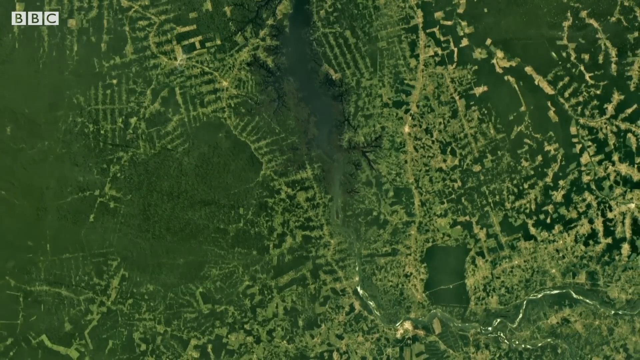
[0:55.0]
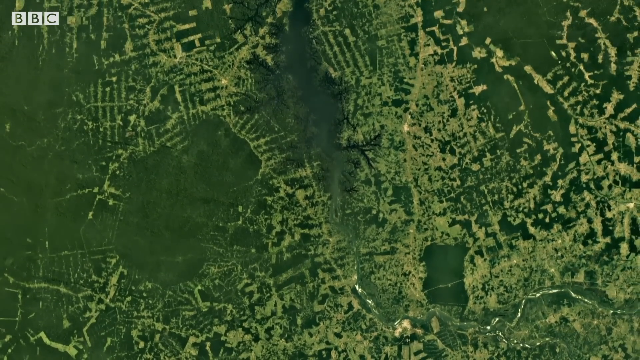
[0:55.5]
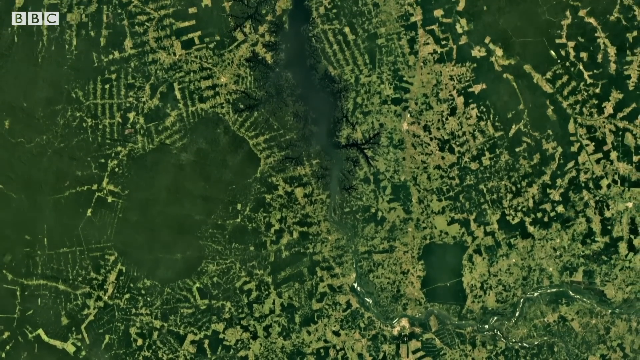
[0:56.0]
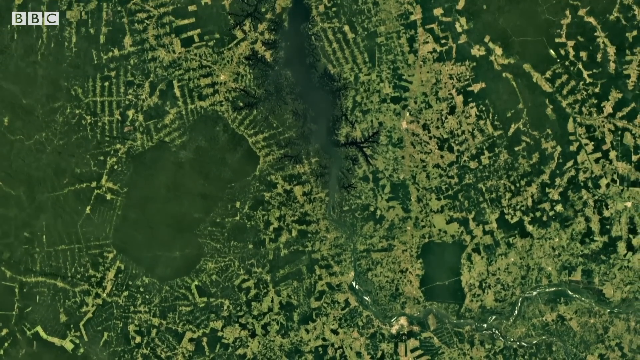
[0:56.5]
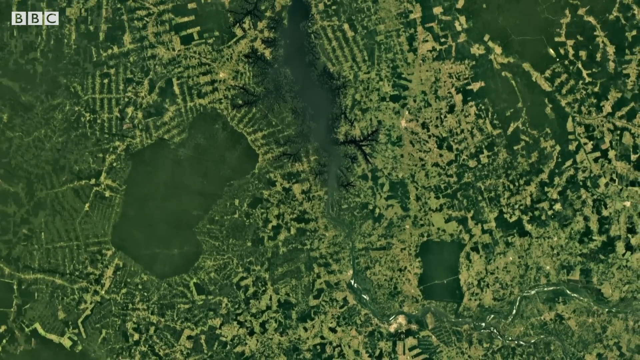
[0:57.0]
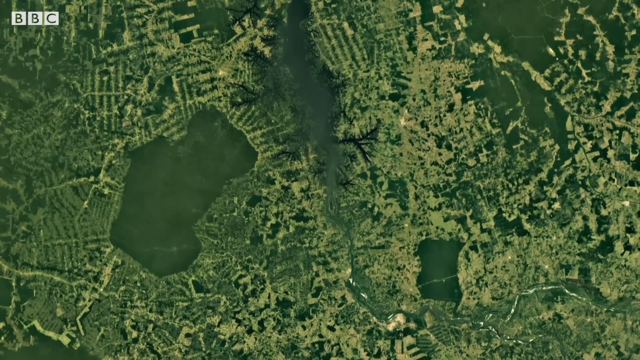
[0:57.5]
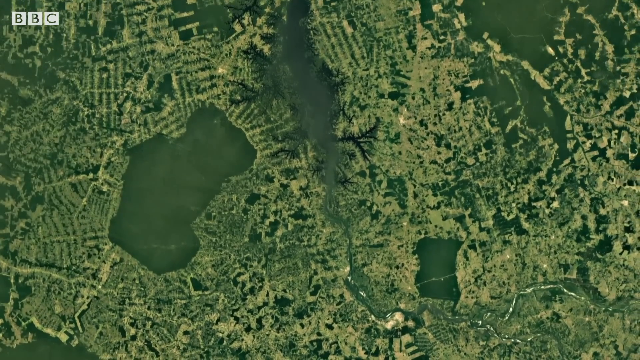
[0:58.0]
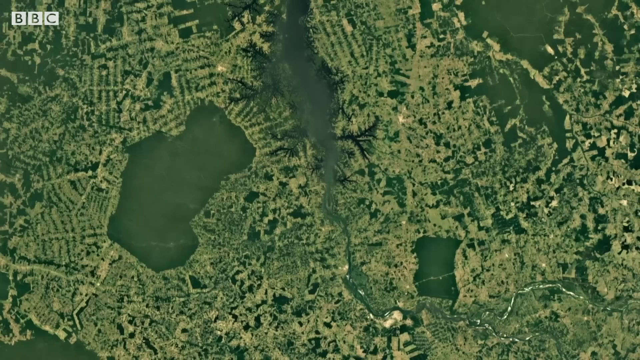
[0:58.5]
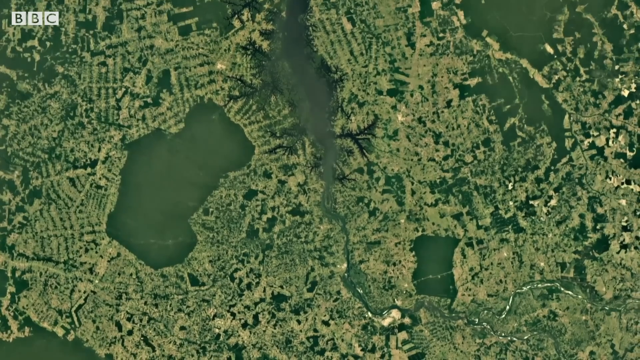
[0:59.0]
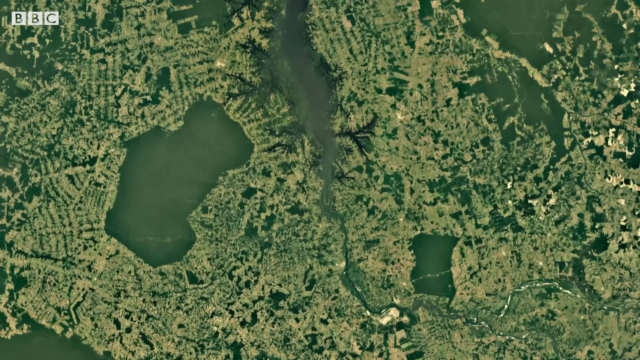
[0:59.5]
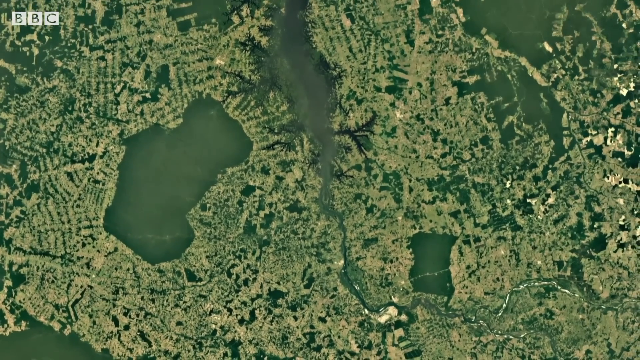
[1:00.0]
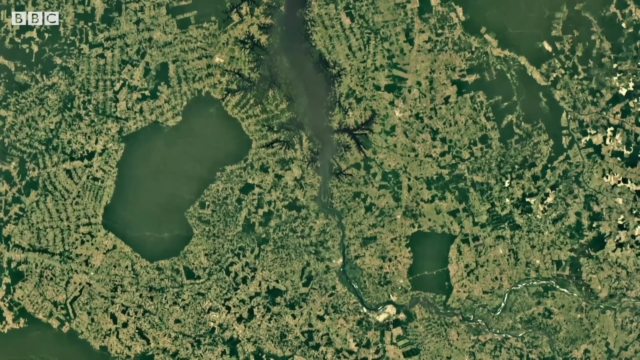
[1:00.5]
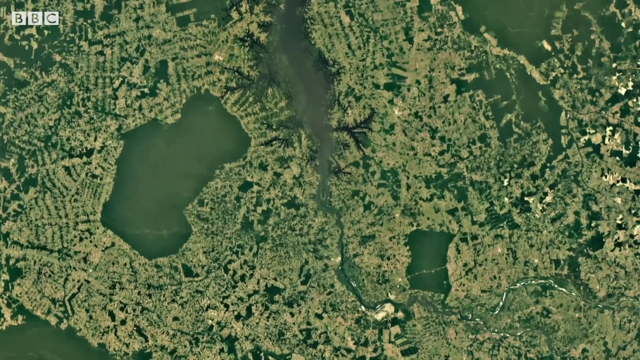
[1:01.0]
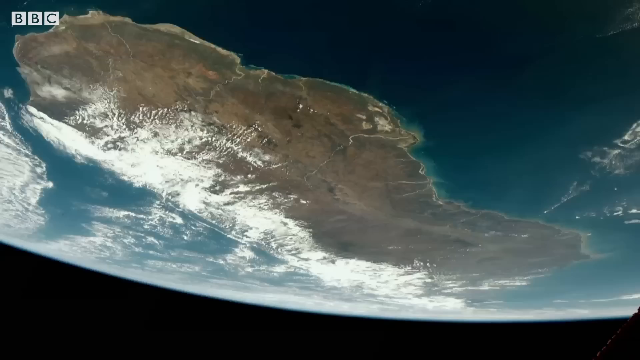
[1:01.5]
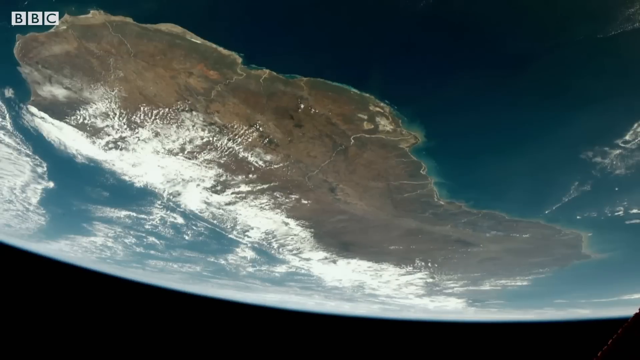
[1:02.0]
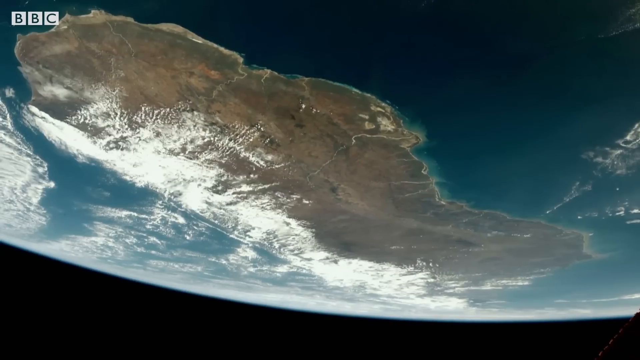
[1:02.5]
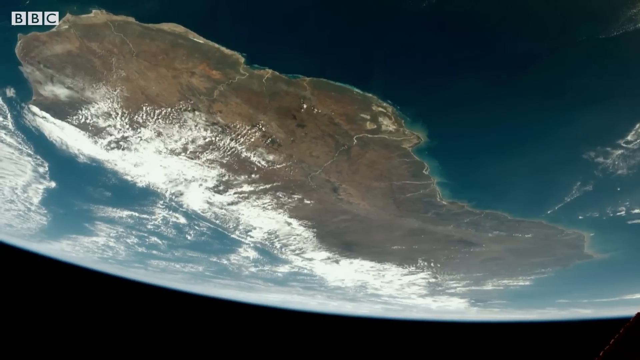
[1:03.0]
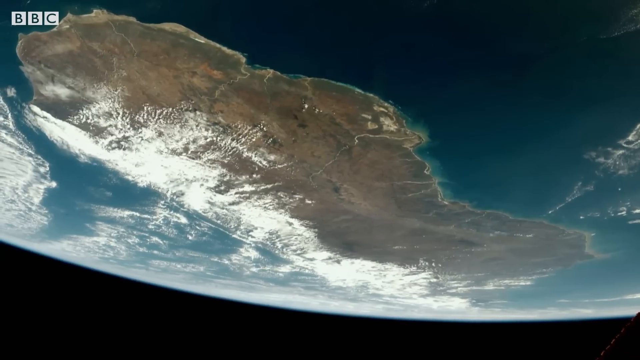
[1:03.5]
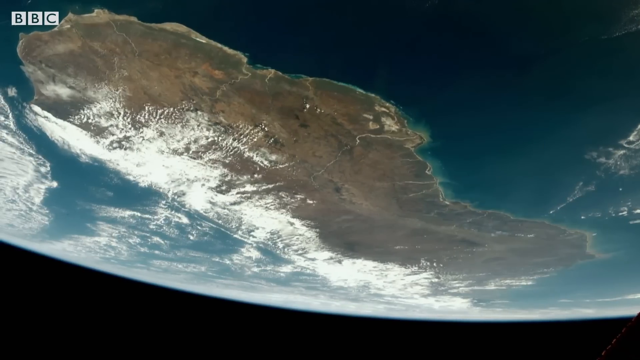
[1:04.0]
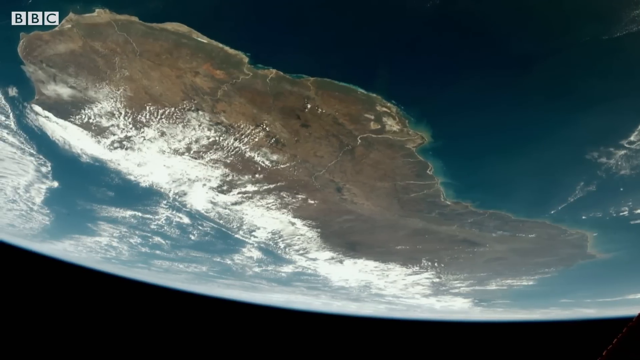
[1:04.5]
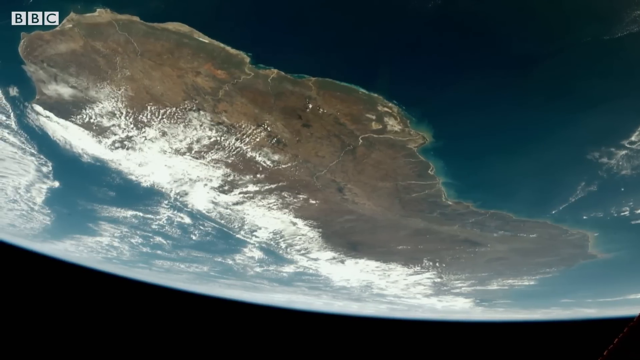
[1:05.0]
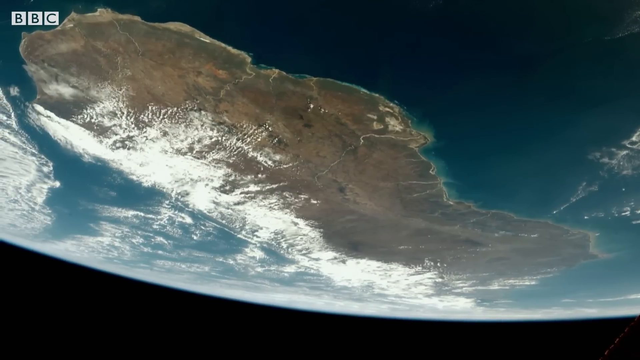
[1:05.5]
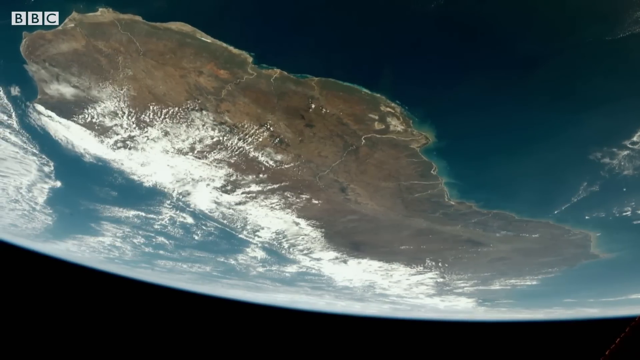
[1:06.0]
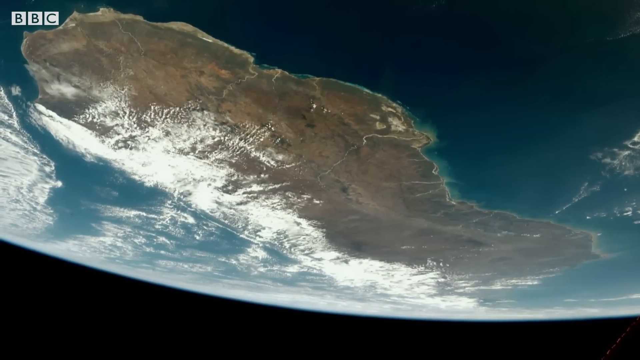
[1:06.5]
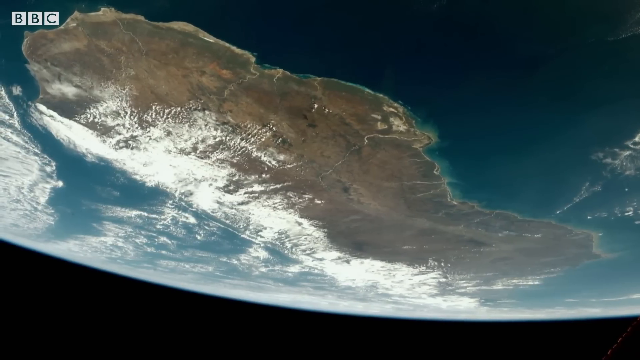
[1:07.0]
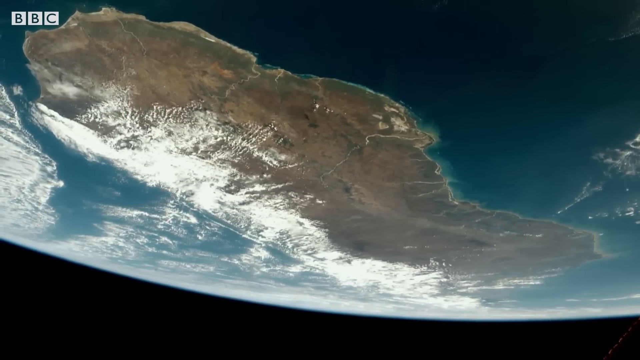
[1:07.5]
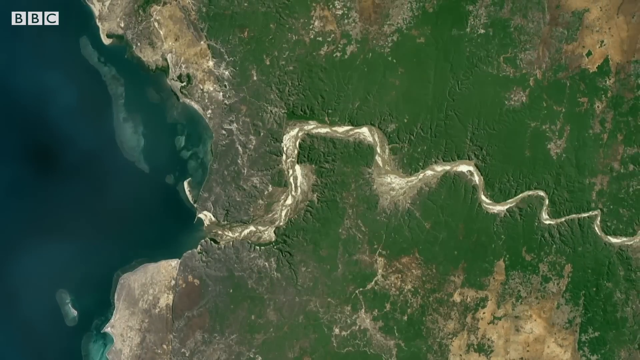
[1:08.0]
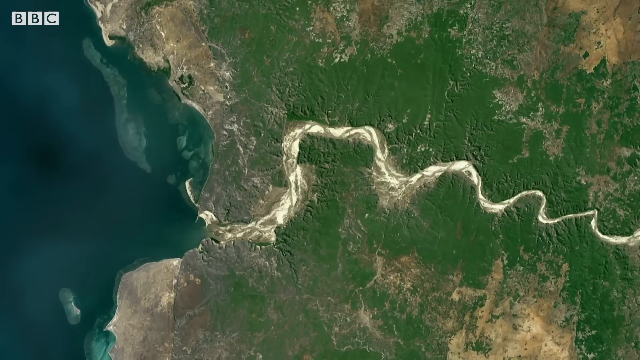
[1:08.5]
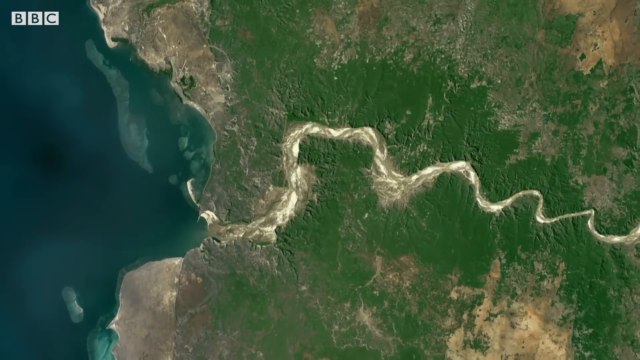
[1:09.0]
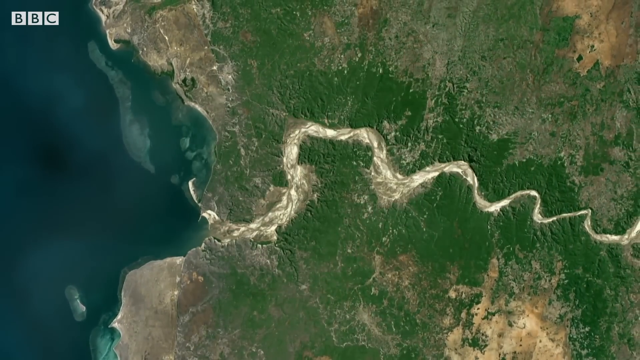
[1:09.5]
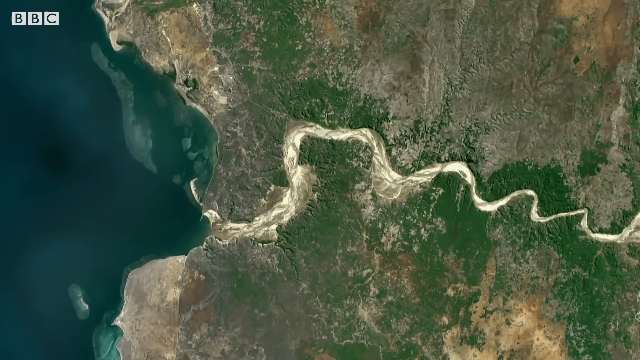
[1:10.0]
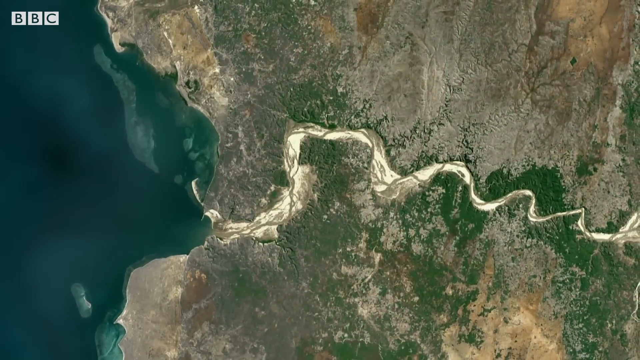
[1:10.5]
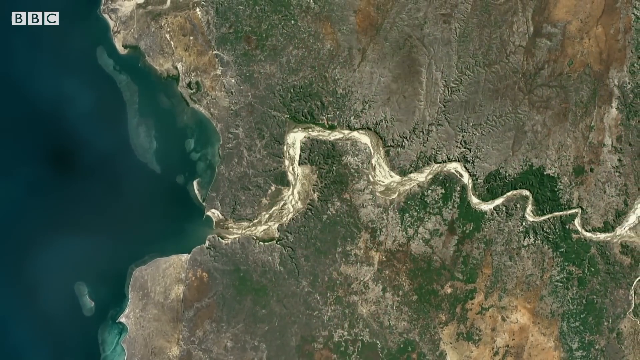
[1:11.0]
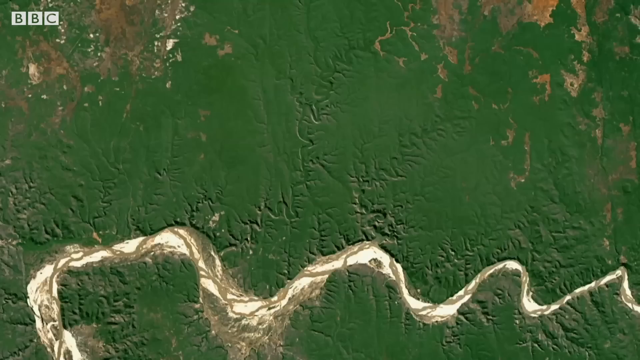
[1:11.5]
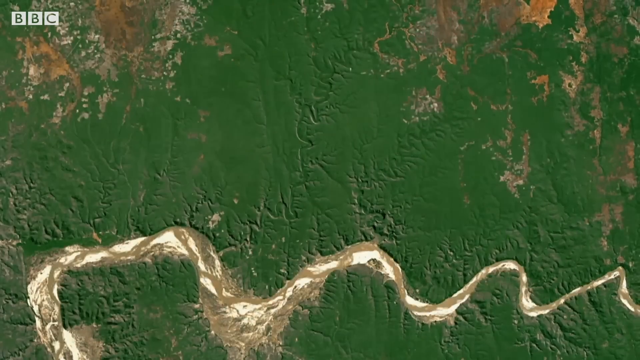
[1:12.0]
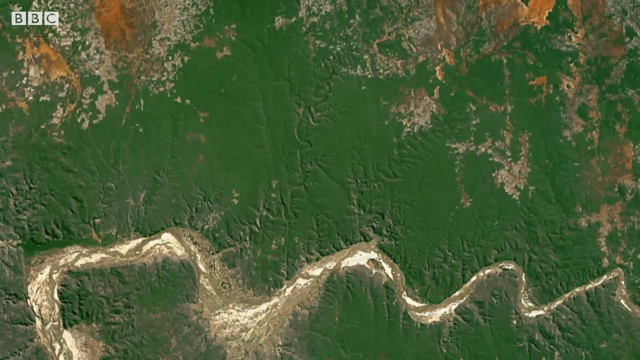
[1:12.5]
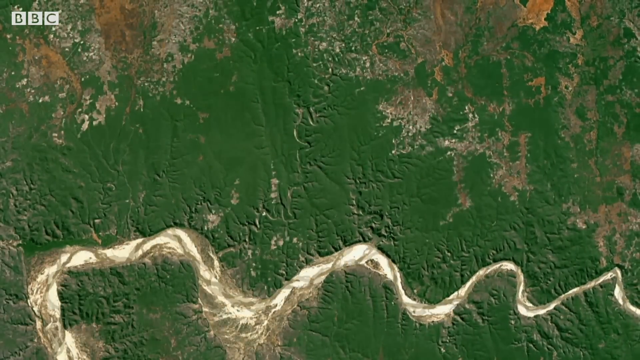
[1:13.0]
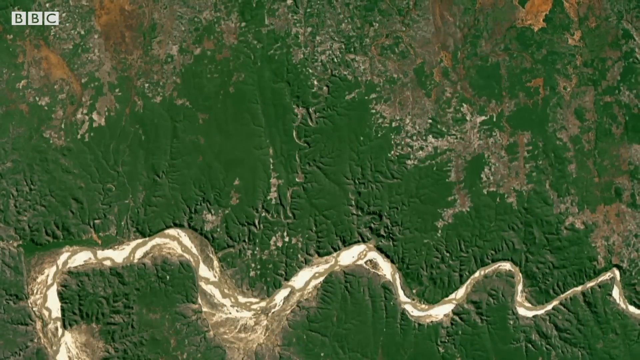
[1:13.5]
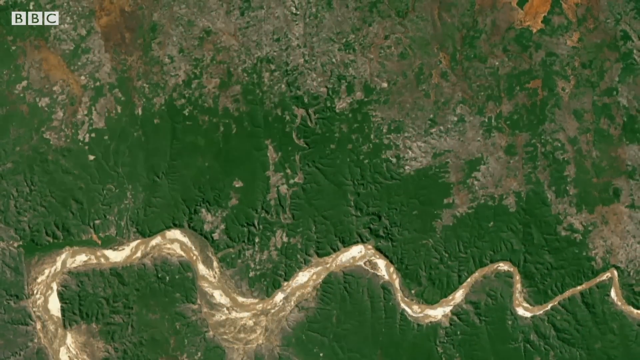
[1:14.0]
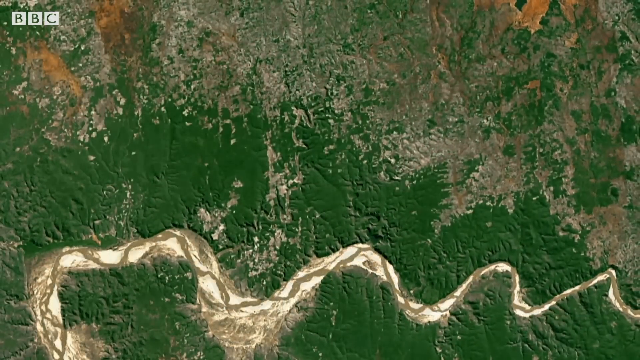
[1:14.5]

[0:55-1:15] The same golf course environment and the same forest environment both become very pale yellow. A giant lake is now more noticeable in the middle of the forest area on the left; it is not circular or any particular shape, but kind of like two bent squares, each at about a 45 degree angle, stitched together. Another smaller pool of water is on the bottom right, right underneath the golf course on the right side, kind of shaped almost like a bee or like the Nintendo Rare logo. Next comes a bottom view of Earth showing a giant landmass that is very rocky looking and very pale, with some white clouds and a lot of water visible. The video then cuts to another sky view of what looks to be another beach, apparently more of a river: a very curly path splits the land in the middle, and on the left is a giant expanse of ocean where the river leads. In a sped-up fashion, the land around it dries up and becomes brown.